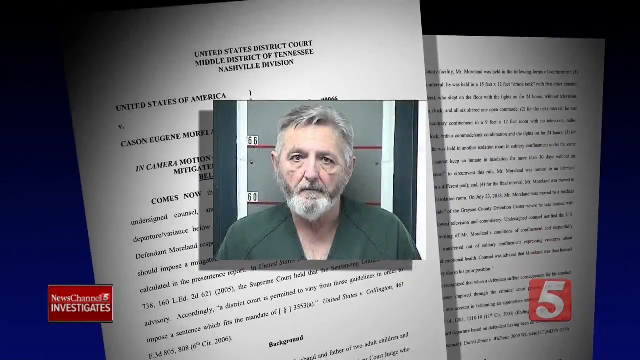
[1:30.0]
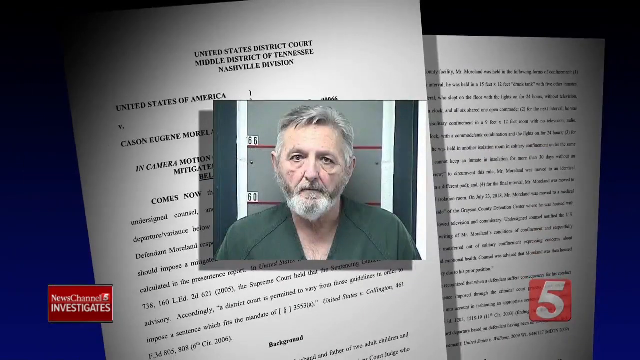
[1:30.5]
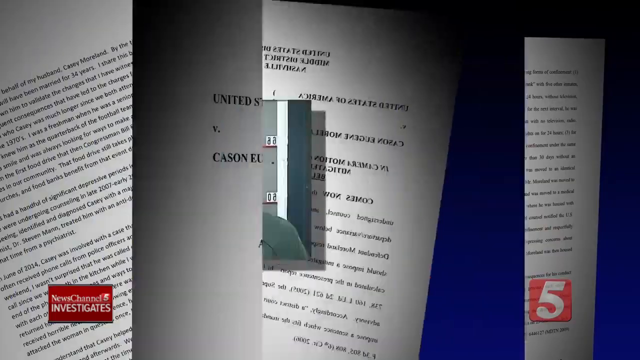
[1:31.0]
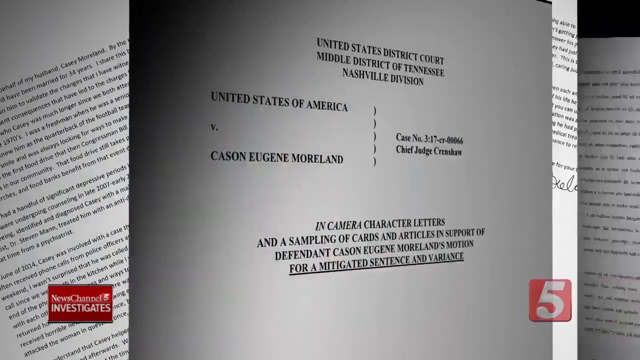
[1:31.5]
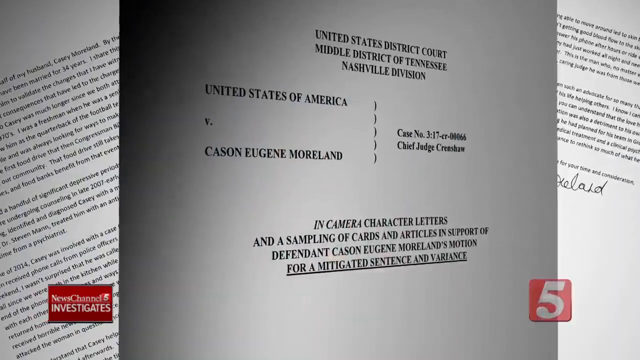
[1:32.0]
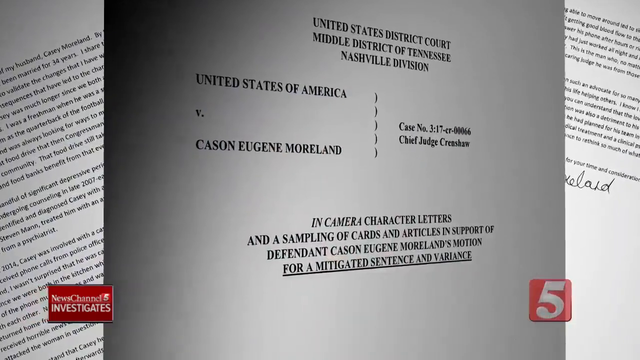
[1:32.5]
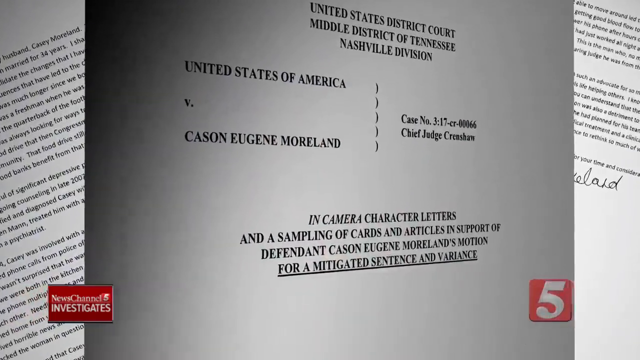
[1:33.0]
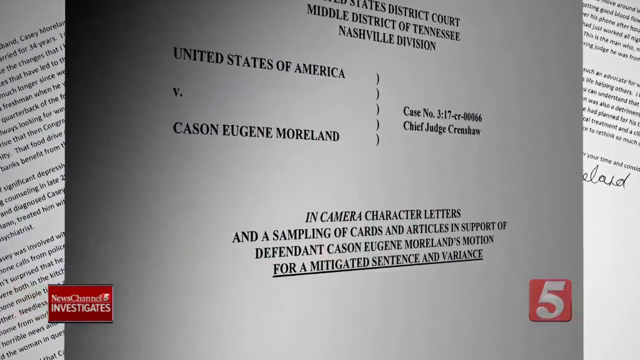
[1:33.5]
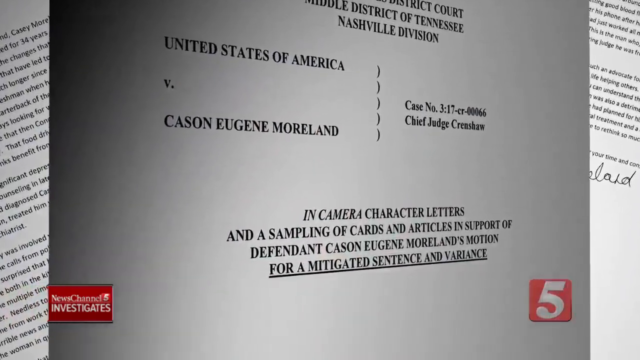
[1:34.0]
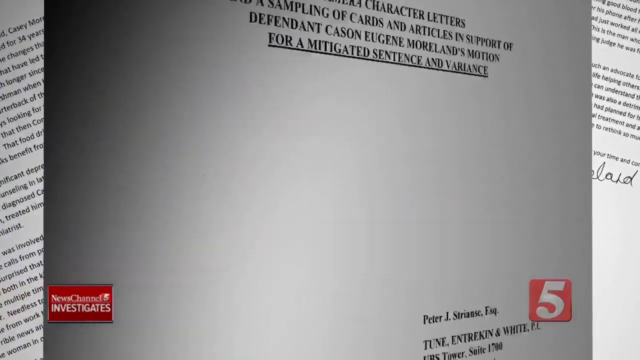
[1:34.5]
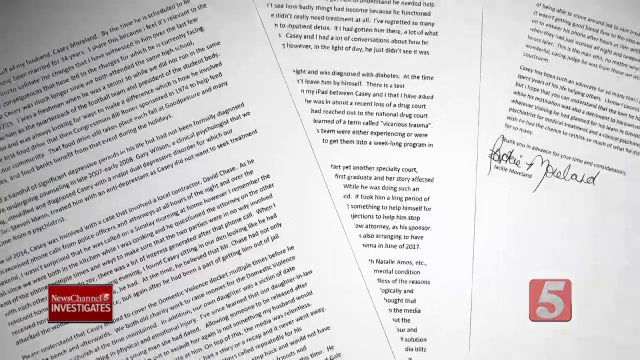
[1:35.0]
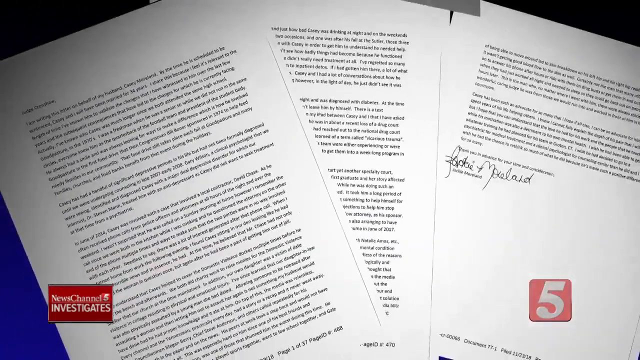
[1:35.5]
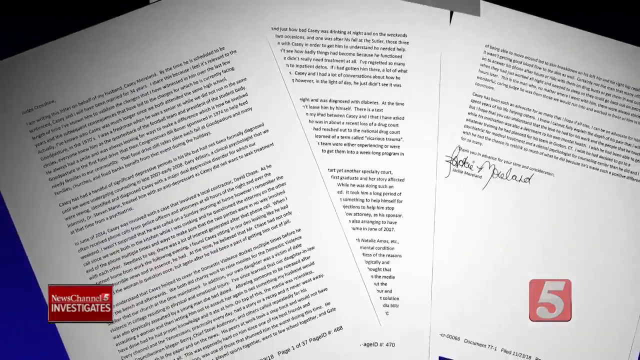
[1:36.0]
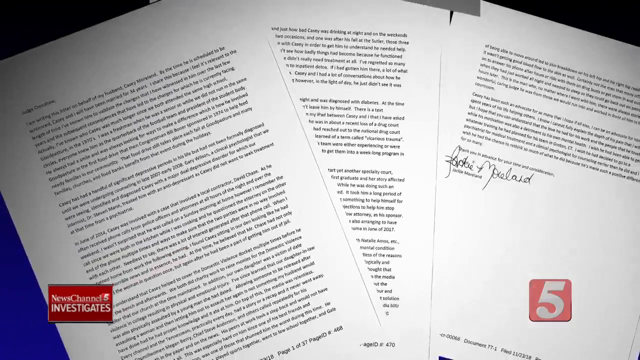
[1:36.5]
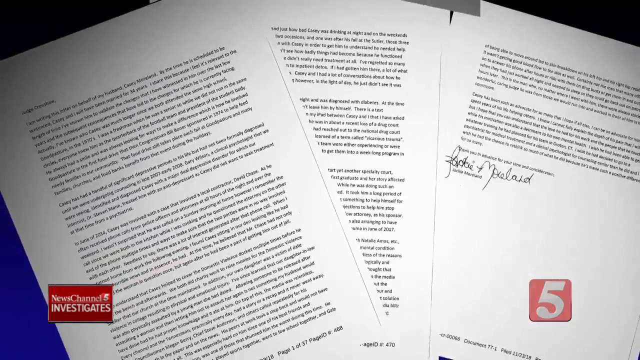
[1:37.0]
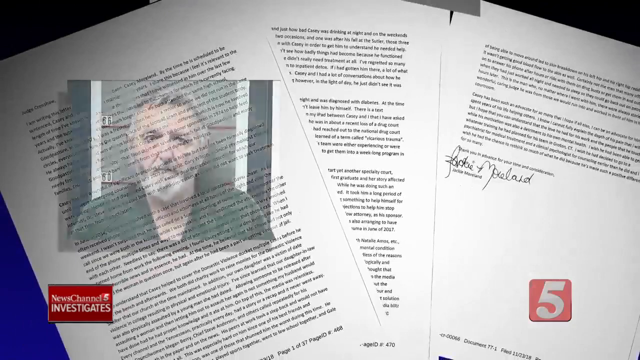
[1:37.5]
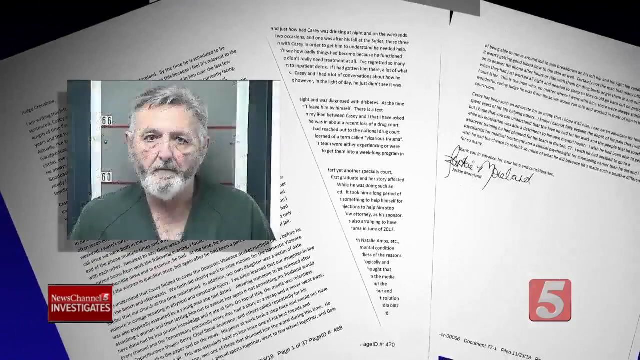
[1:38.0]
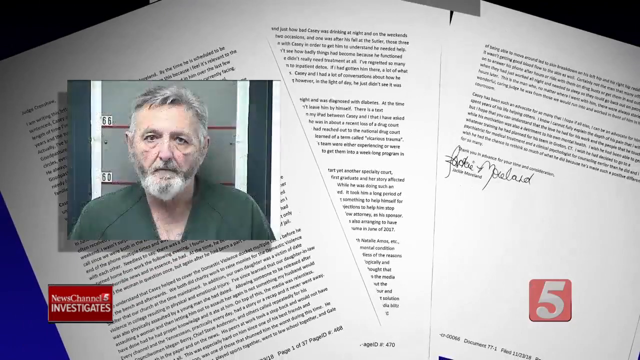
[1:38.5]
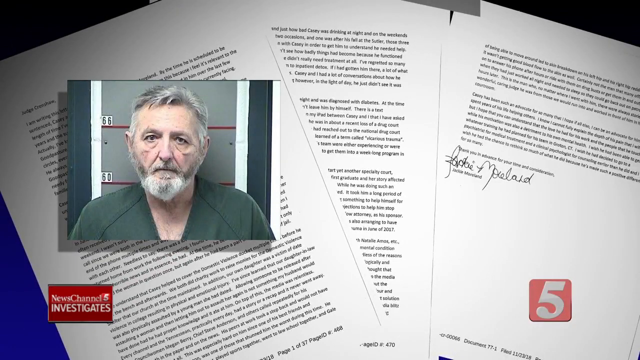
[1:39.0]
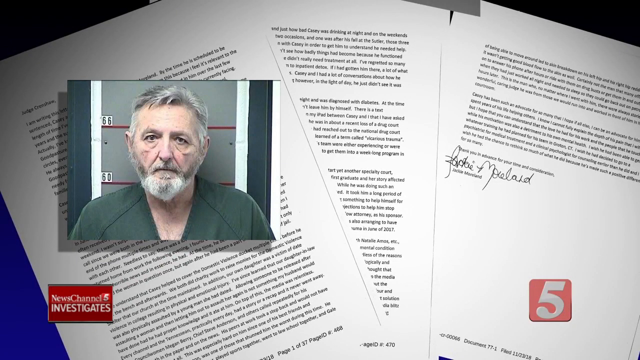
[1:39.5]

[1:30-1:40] The front of the court document is shown once again, slightly turned to the side, with other pages of documents in the background. The camera moves toward the front of the original document, which then immediately moves upward out of the frame, leaving three pages placed on top of one another, too far away for any particular word to be read. There is a signature on the last page, but it is too small to read. The camera pans backward, and the judge's mugshot is shown once again, this time to the left of the three pages.